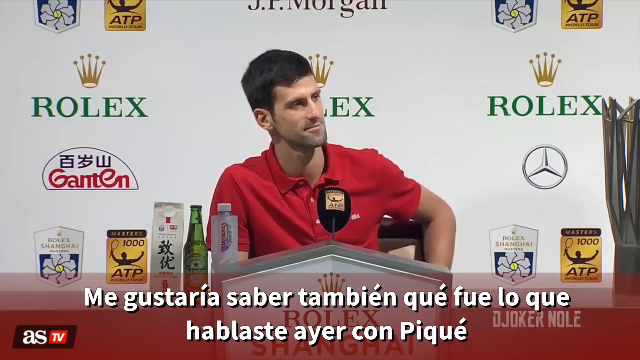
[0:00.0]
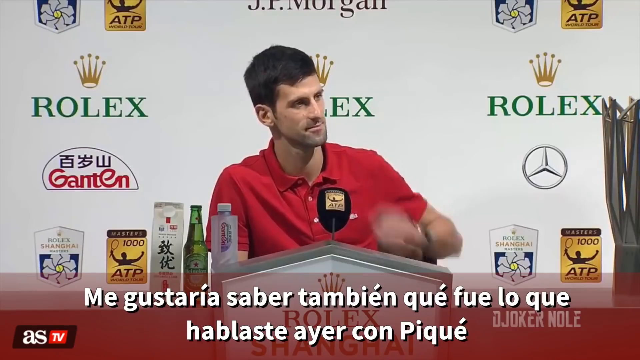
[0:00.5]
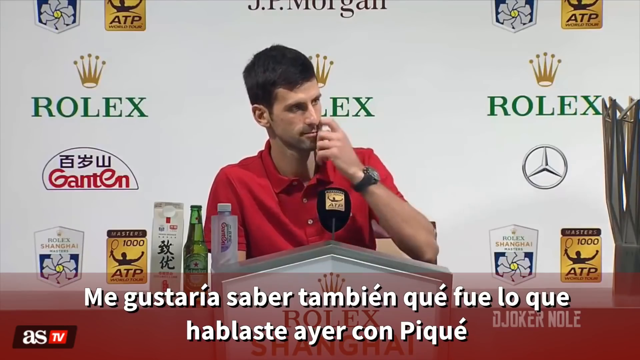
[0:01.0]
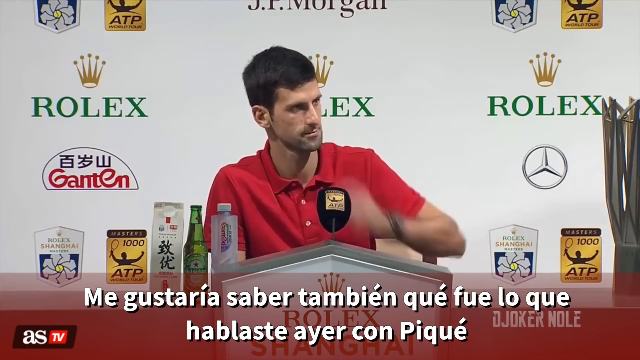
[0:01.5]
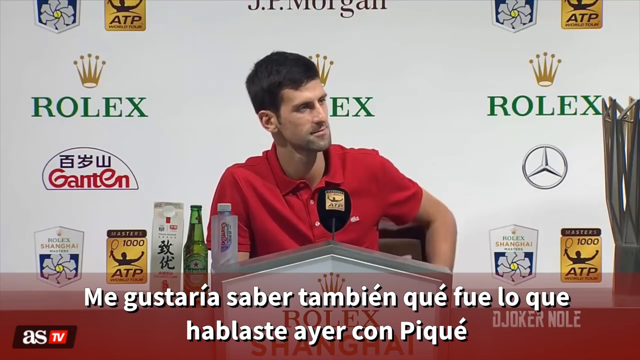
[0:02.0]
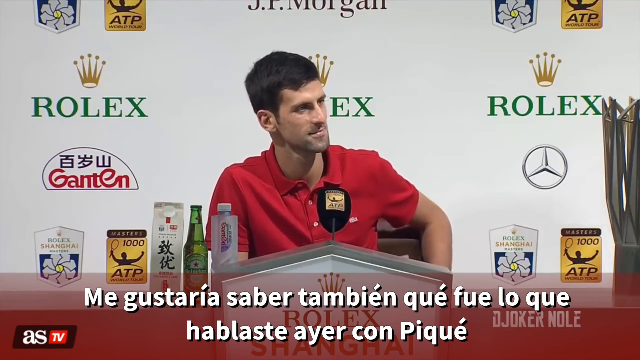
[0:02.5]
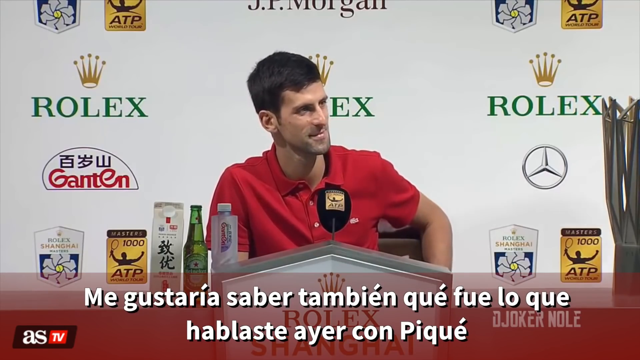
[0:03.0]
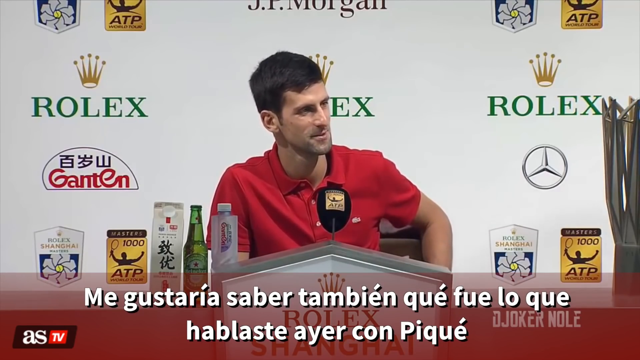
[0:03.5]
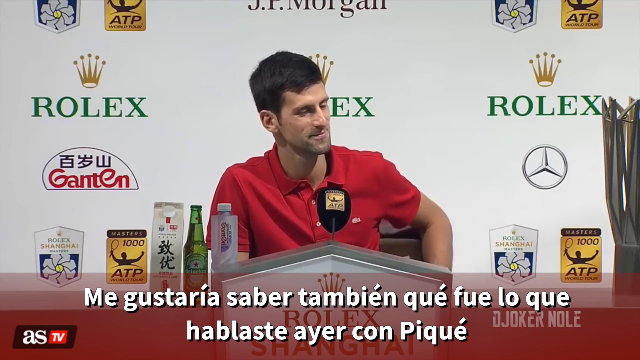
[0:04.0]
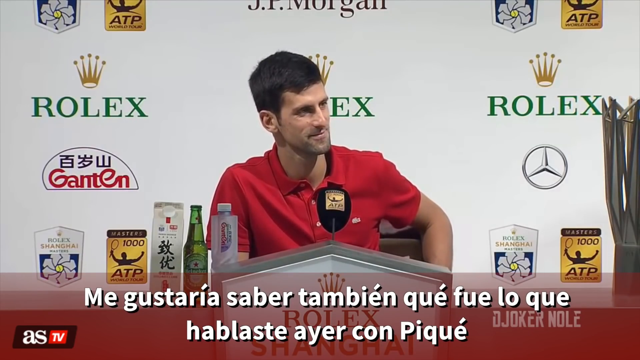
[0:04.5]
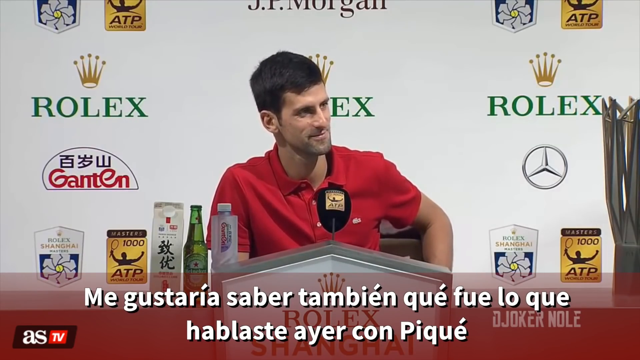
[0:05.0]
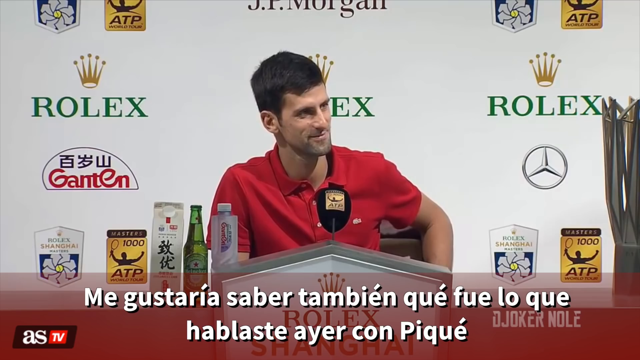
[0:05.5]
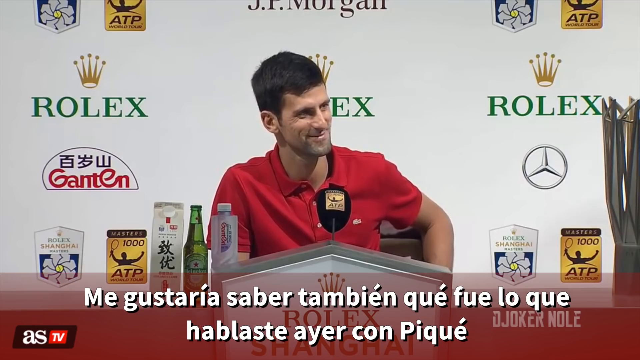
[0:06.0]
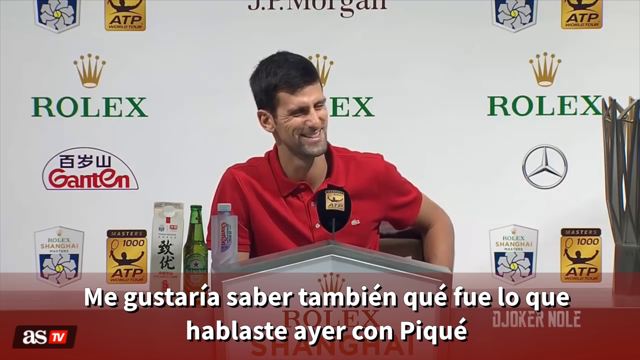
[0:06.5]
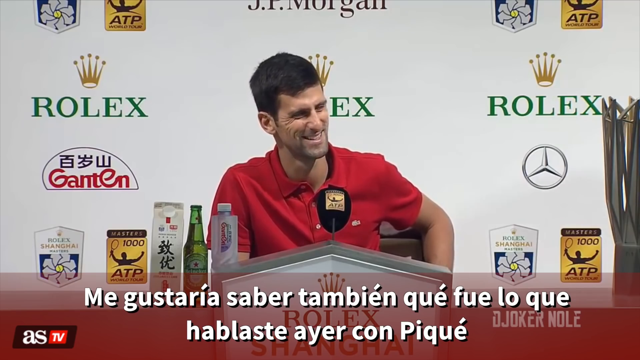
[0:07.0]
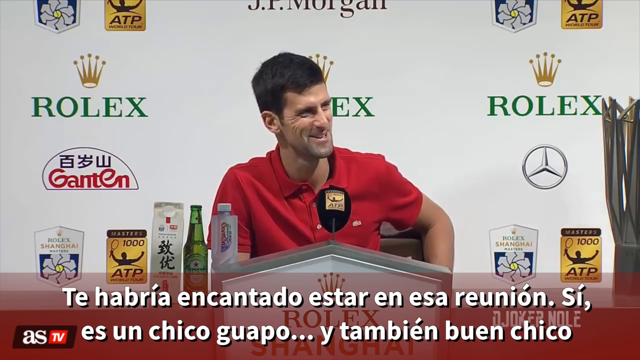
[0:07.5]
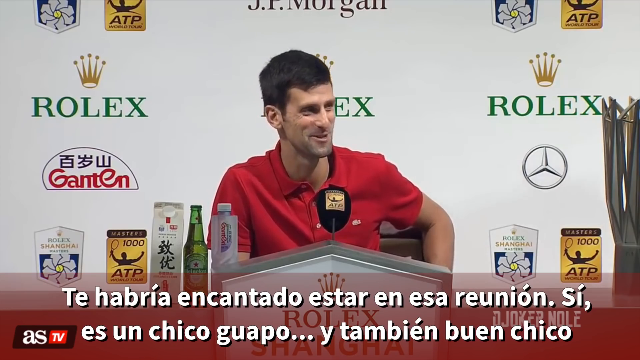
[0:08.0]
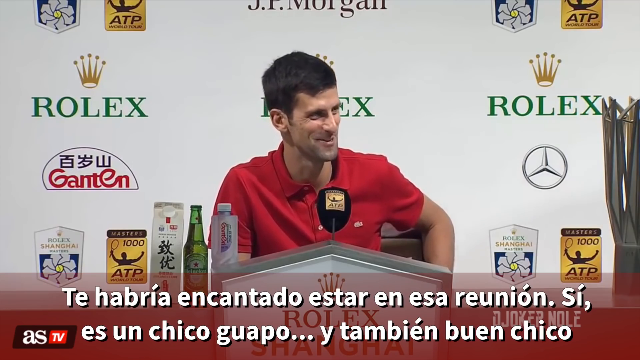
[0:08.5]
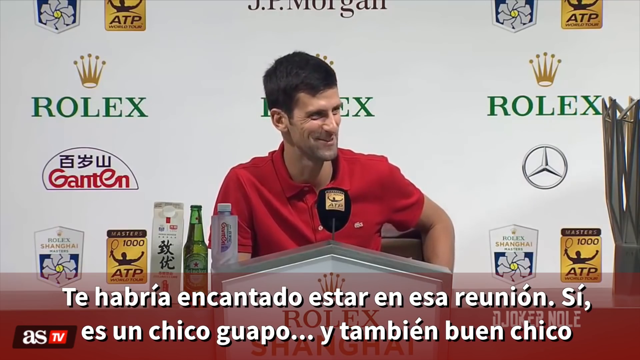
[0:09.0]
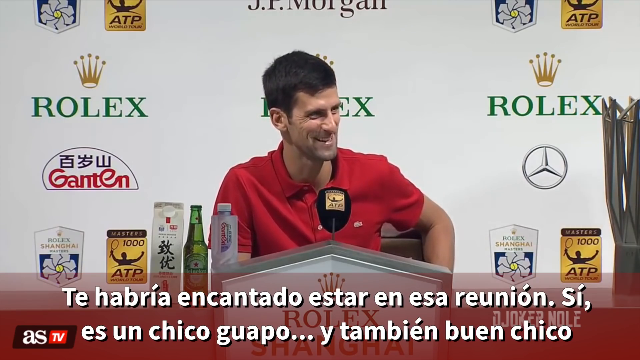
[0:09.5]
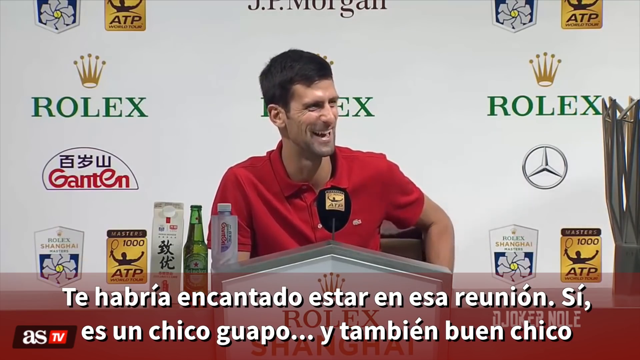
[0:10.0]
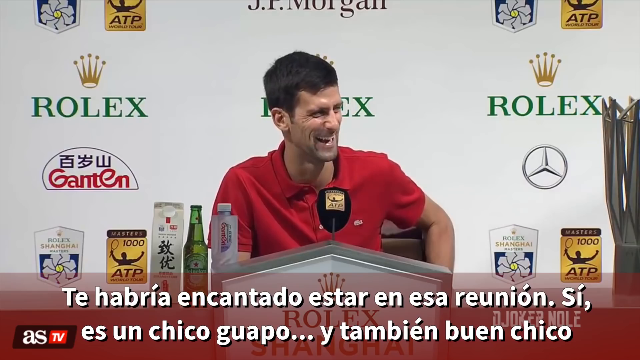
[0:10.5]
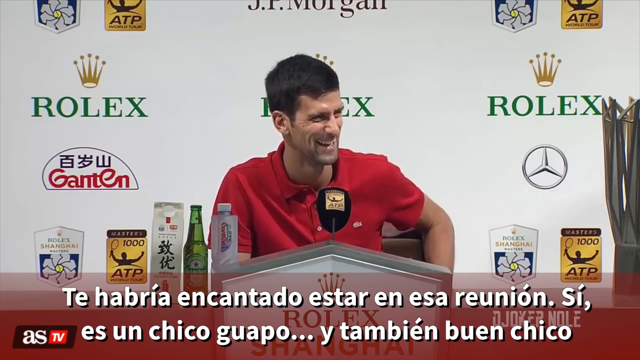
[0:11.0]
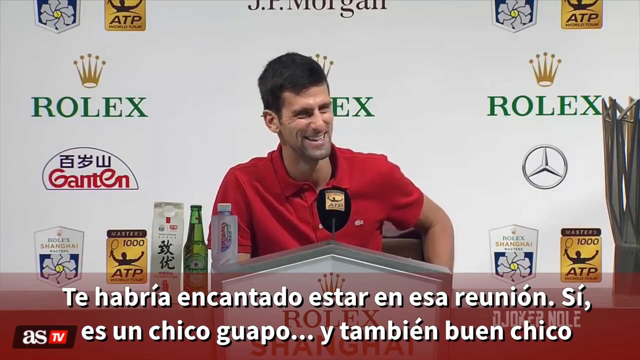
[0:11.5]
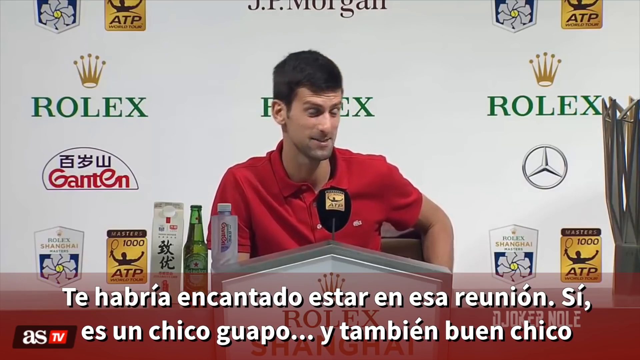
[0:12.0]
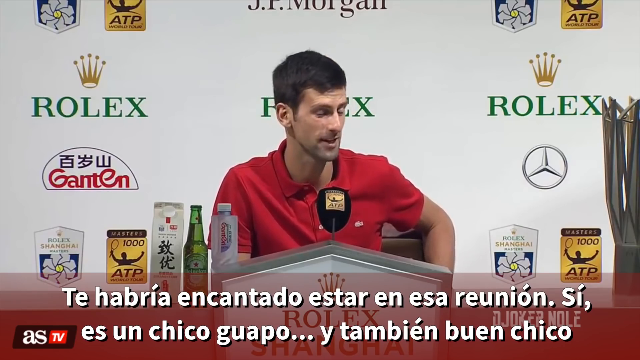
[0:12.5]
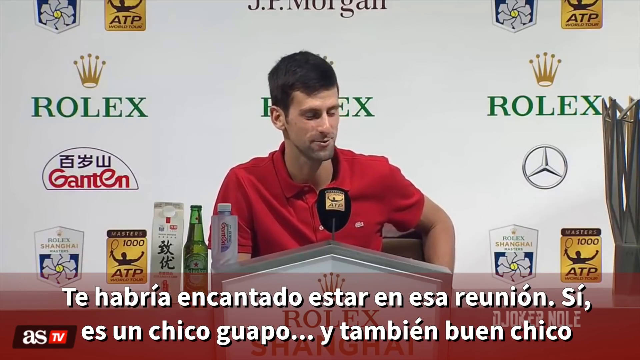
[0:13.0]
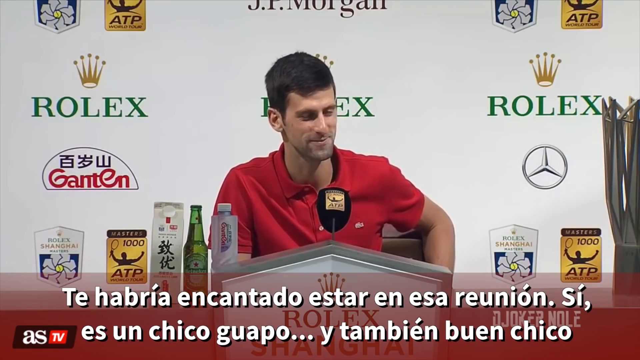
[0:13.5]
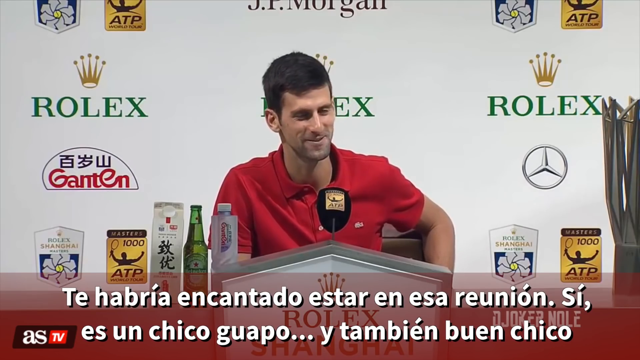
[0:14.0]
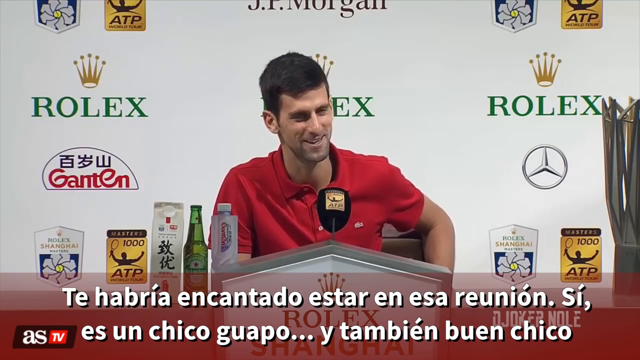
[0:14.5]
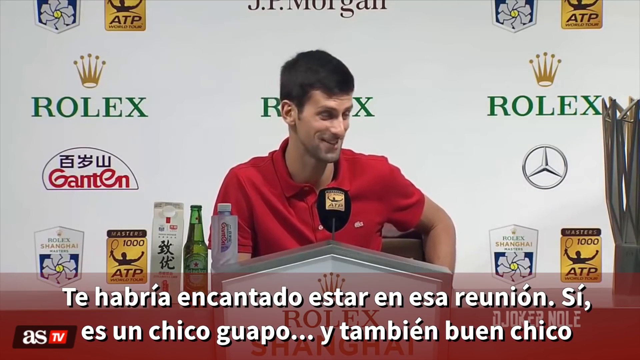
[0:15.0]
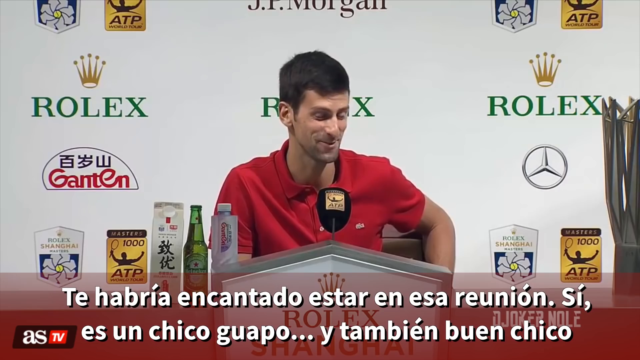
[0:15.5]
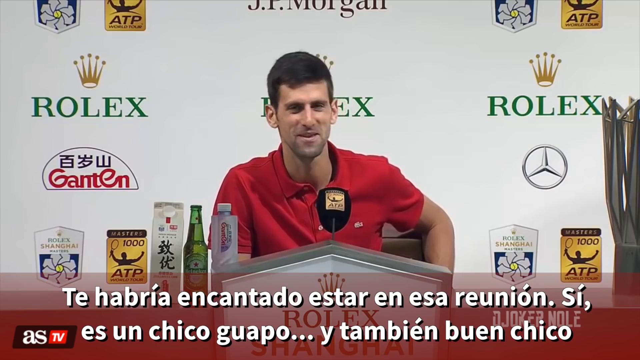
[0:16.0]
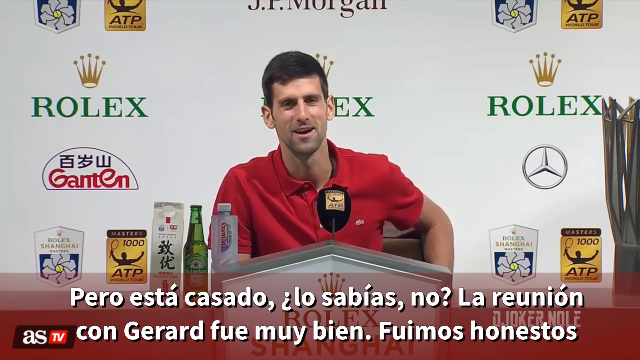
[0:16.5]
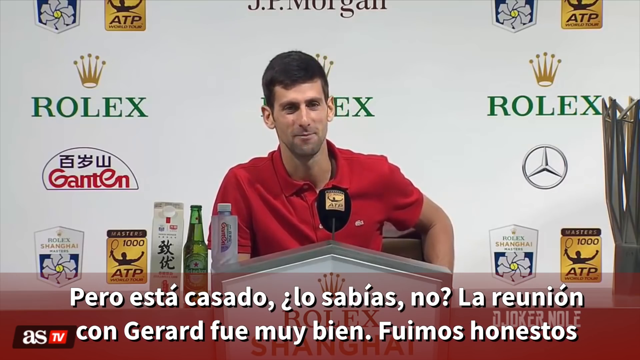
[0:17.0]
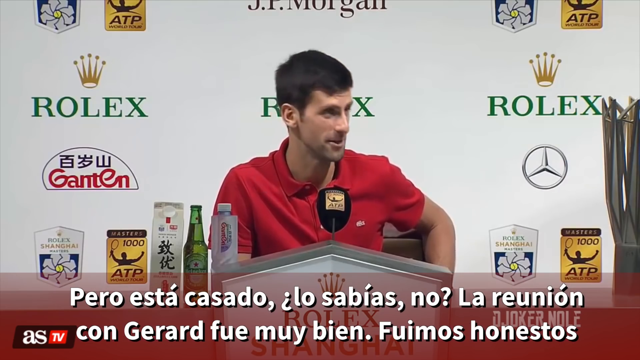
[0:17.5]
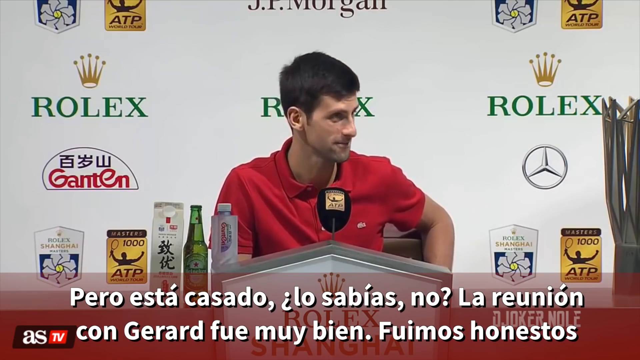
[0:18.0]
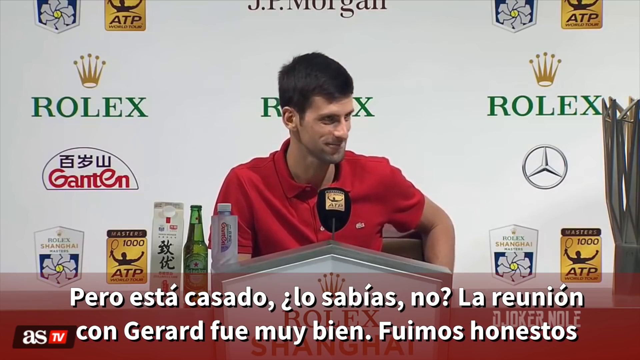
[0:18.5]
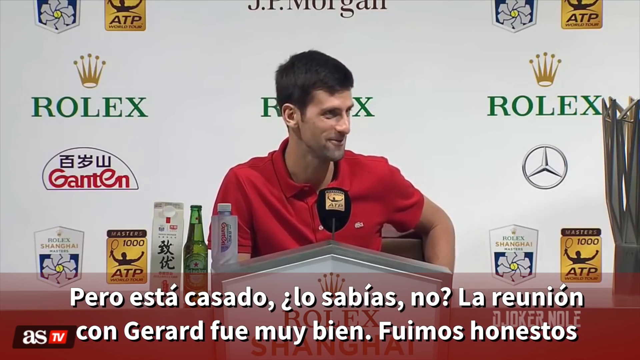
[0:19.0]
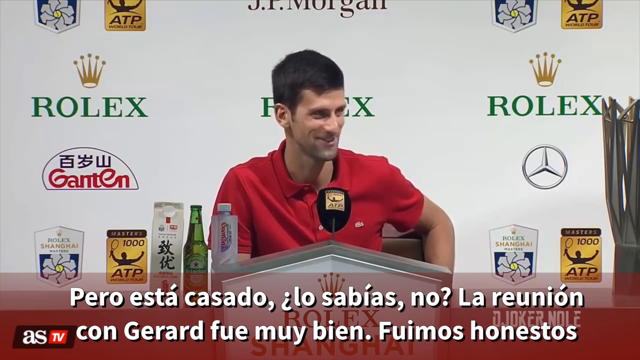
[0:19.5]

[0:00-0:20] A man who appears to be a tennis player is giving a press conference. He wears a red polo shirt and is looking to the right side. At the beginning he scratches the side of his nose with the index finger of his left hand. He wears a black watch on his left wrist, and he puts his hand down behind the desk he is sitting at. He keeps looking to the right, apparently listening to a question being asked, and then he smiles and laughs while continuing to look to the right. Captions in a foreign language appear at the bottom of the screen while he speaks. He laughs again, then talks while looking down, continues to look toward his right side, looks forward toward the viewer, and then looks back to the right side, talking in that direction. Behind him is a white backdrop of sponsor logos: Rolex symbols, a J.P. Morgan symbol on top in the center, and a Mercedes-Benz symbol to the right side.